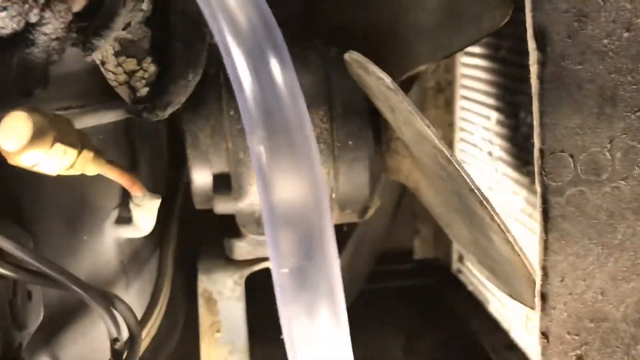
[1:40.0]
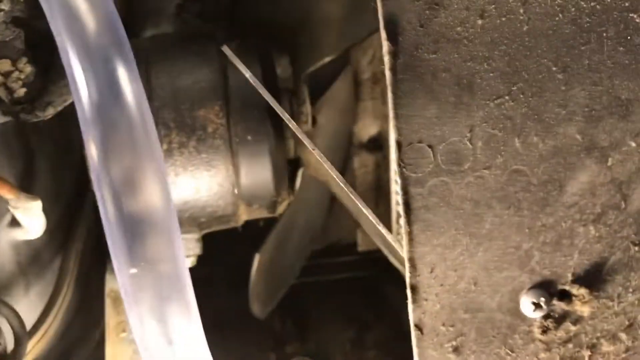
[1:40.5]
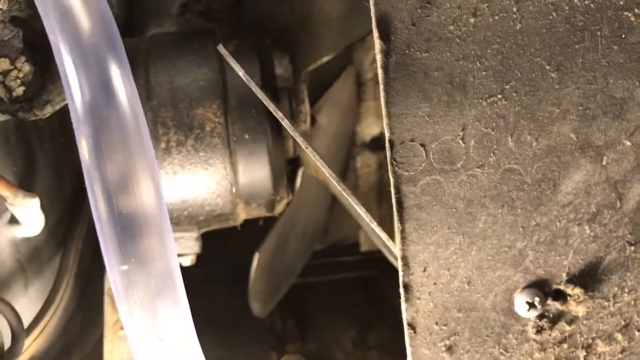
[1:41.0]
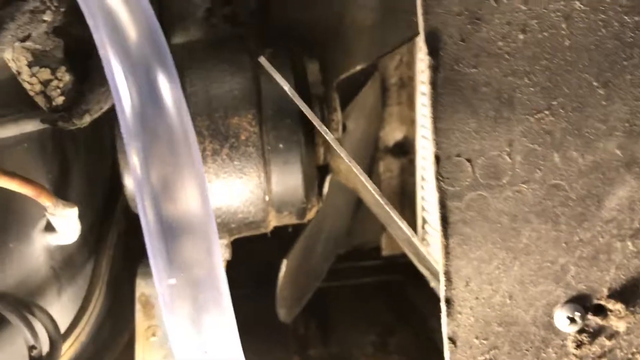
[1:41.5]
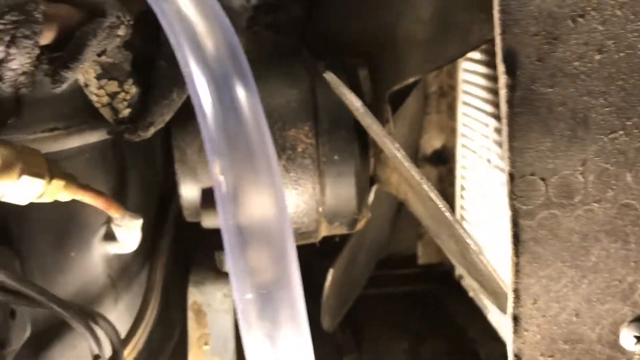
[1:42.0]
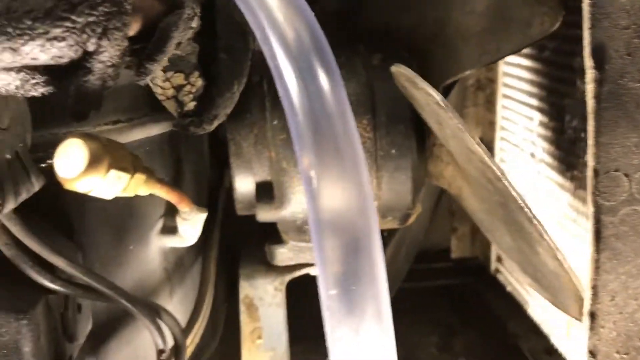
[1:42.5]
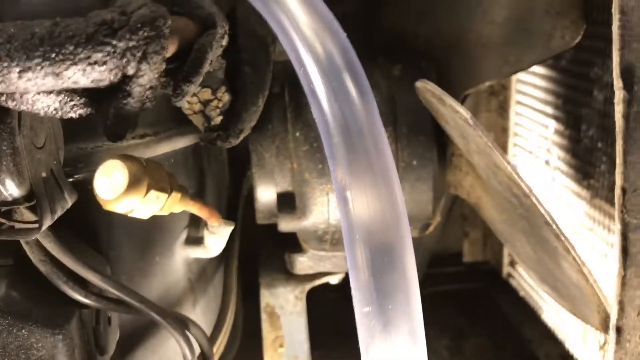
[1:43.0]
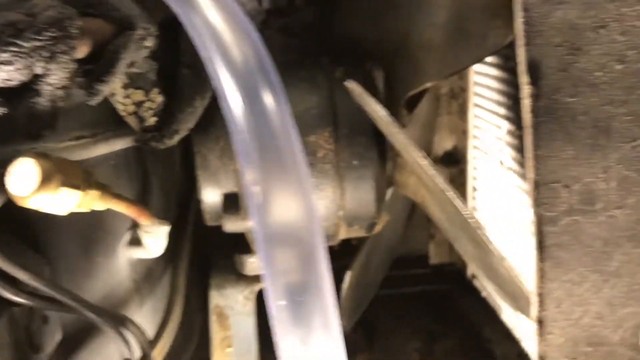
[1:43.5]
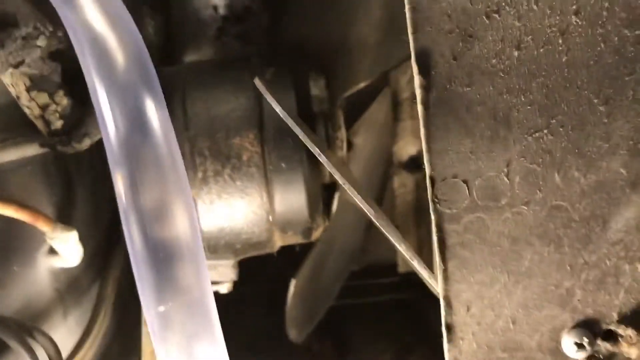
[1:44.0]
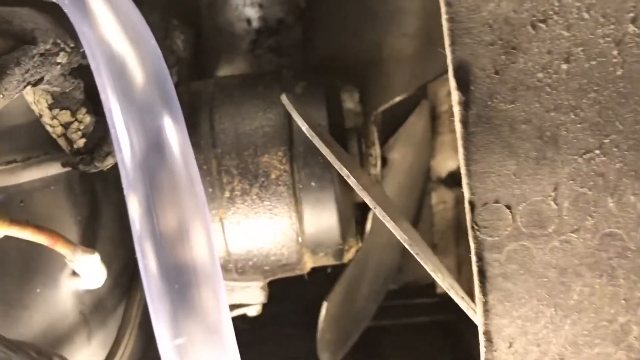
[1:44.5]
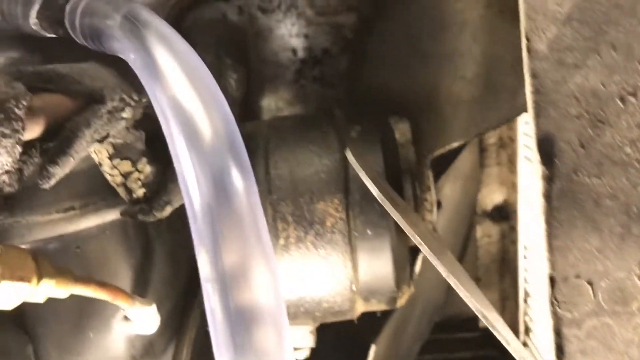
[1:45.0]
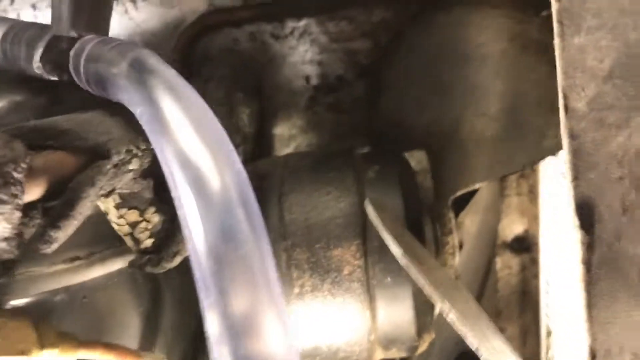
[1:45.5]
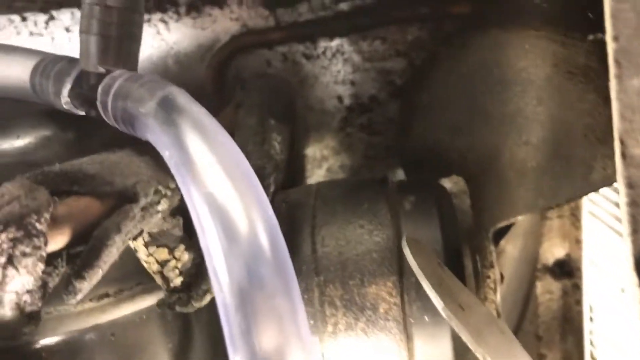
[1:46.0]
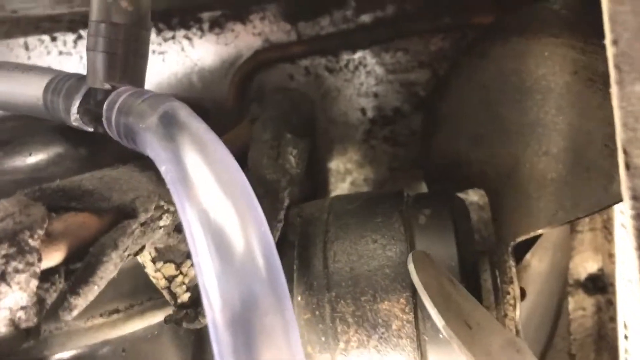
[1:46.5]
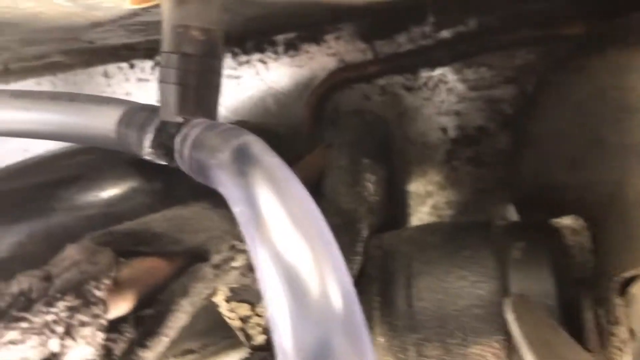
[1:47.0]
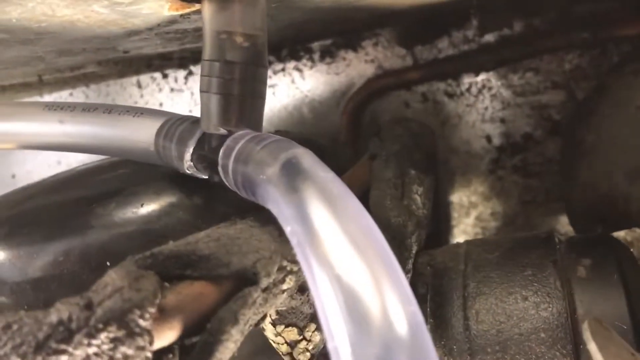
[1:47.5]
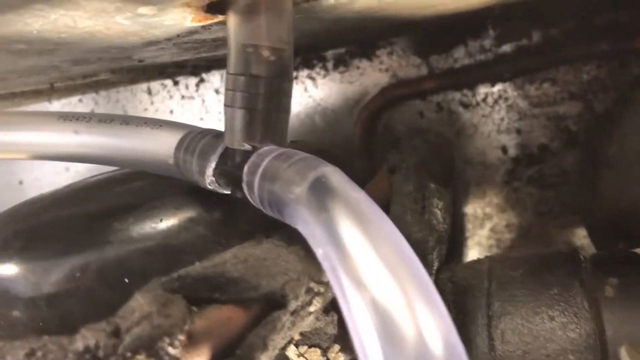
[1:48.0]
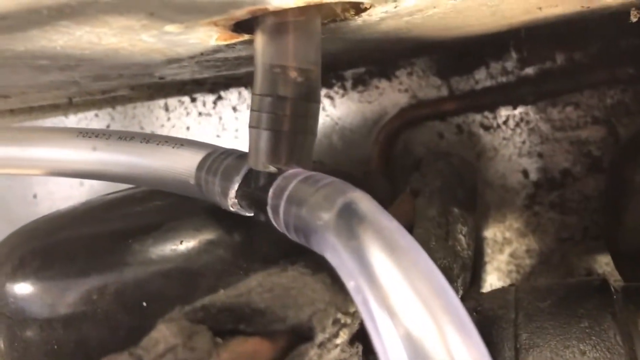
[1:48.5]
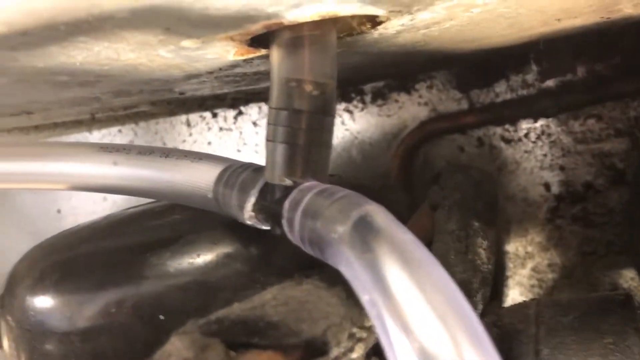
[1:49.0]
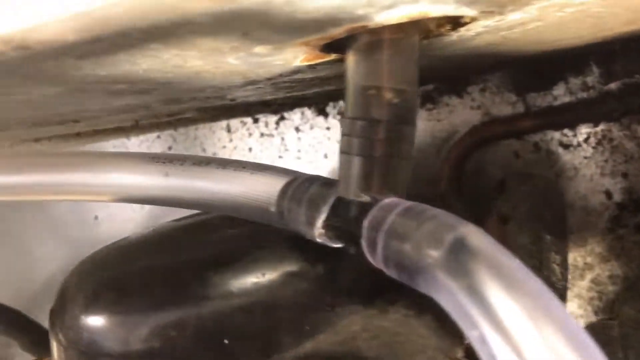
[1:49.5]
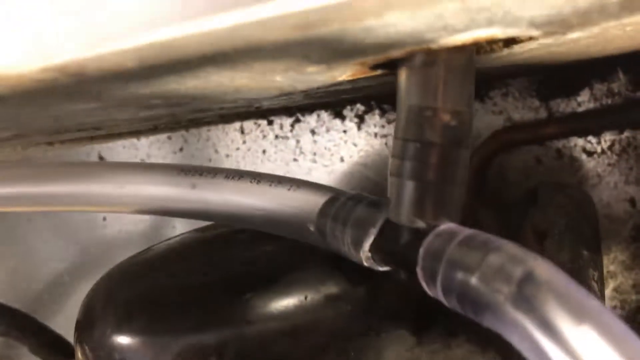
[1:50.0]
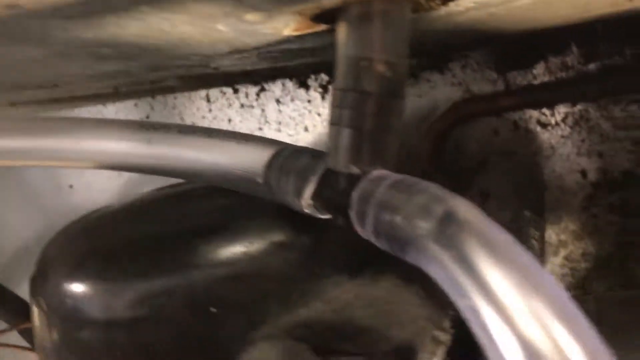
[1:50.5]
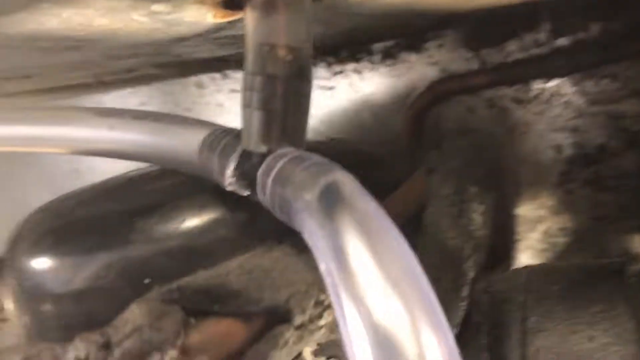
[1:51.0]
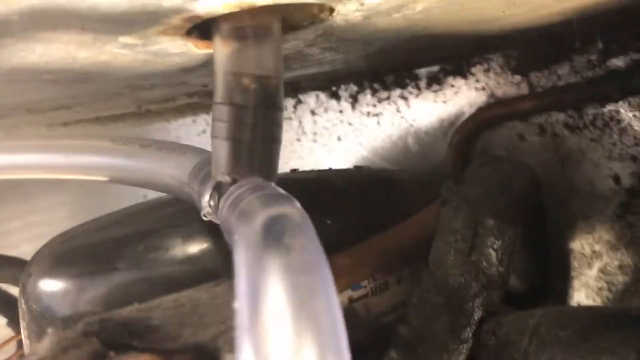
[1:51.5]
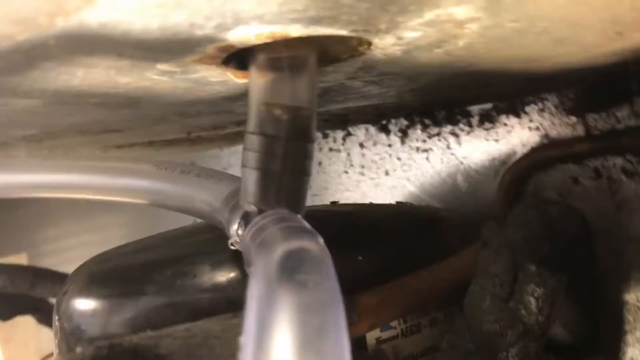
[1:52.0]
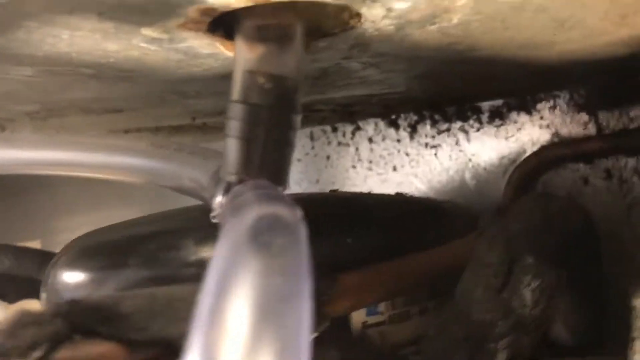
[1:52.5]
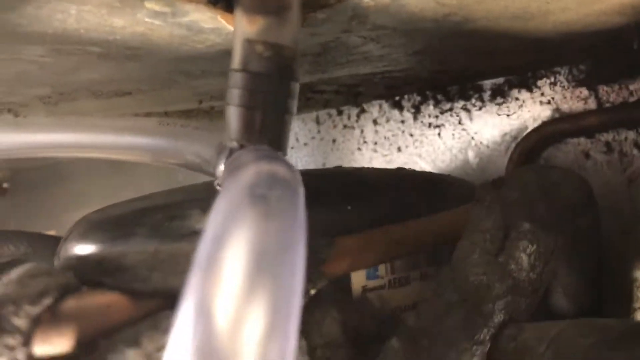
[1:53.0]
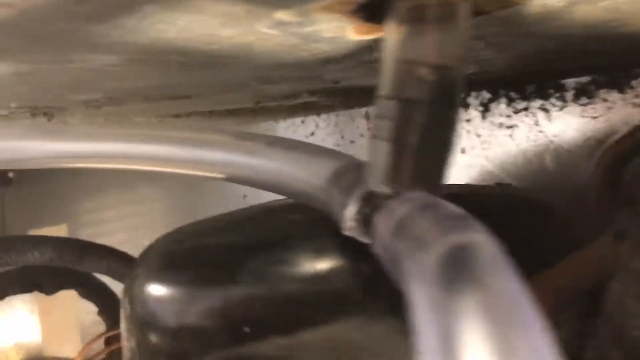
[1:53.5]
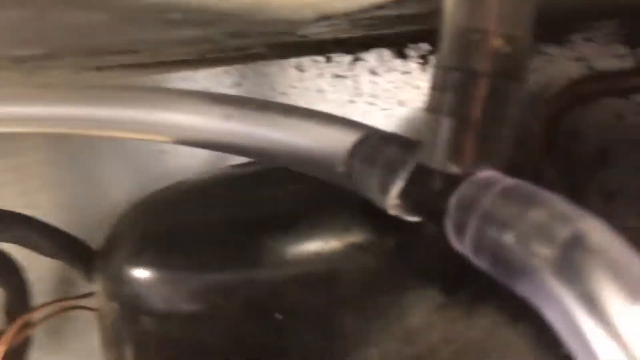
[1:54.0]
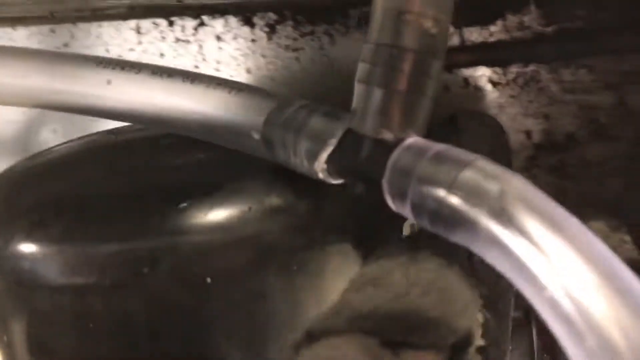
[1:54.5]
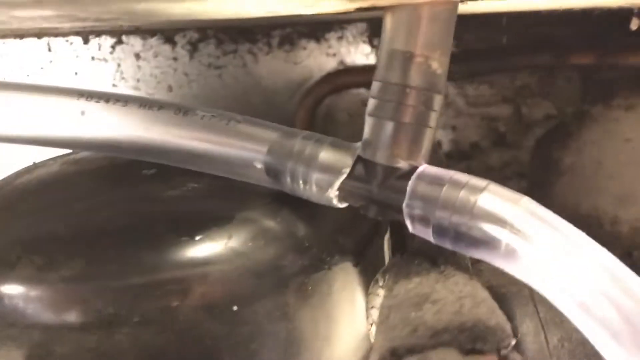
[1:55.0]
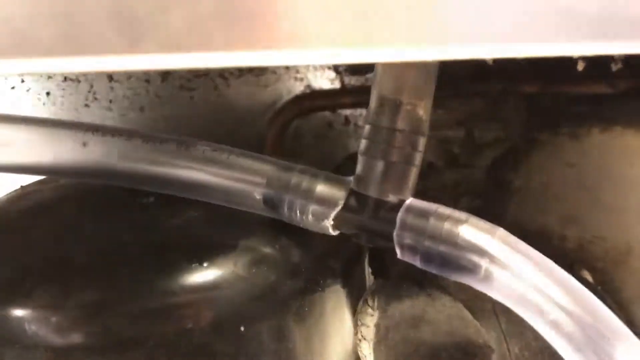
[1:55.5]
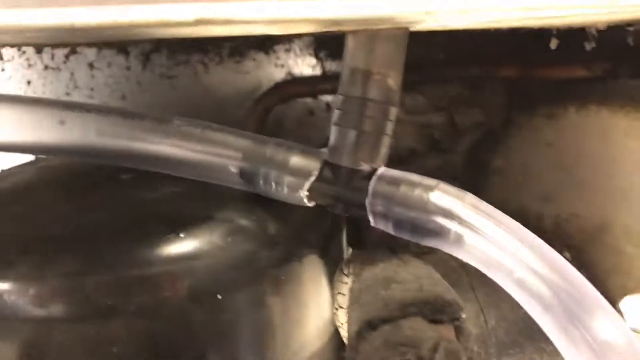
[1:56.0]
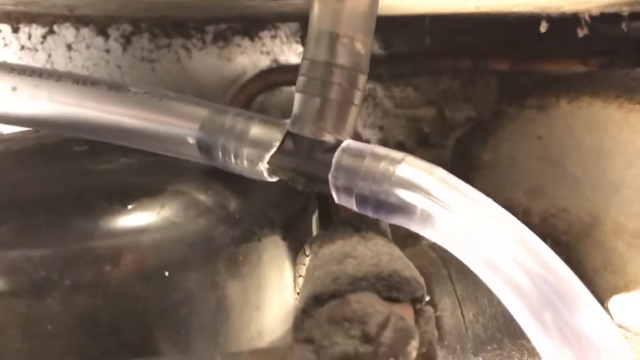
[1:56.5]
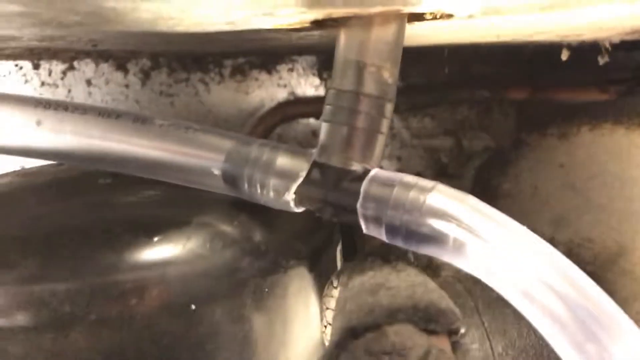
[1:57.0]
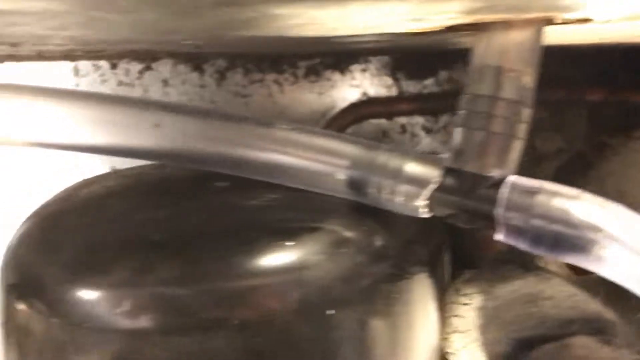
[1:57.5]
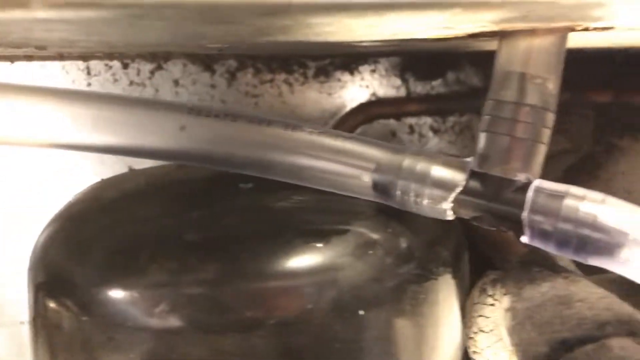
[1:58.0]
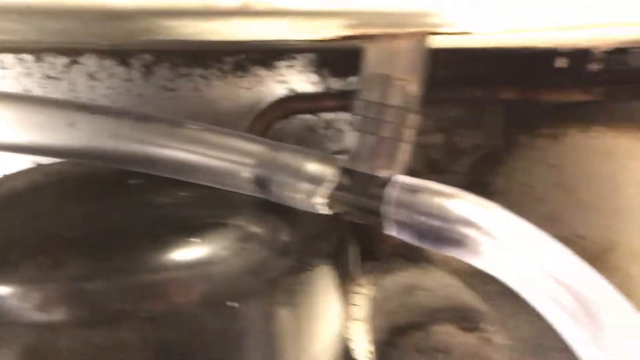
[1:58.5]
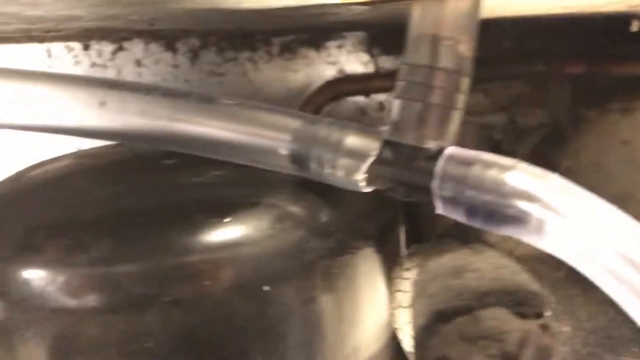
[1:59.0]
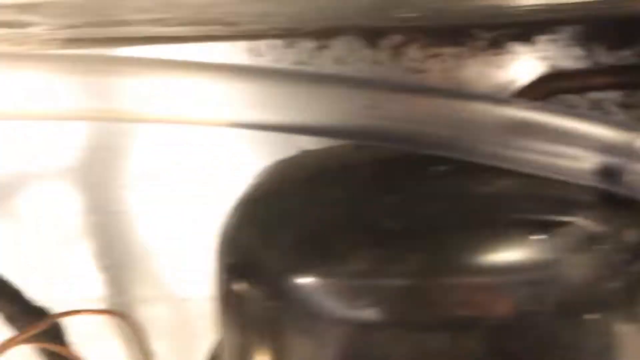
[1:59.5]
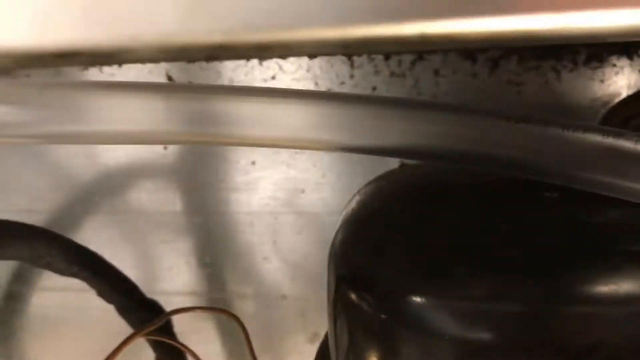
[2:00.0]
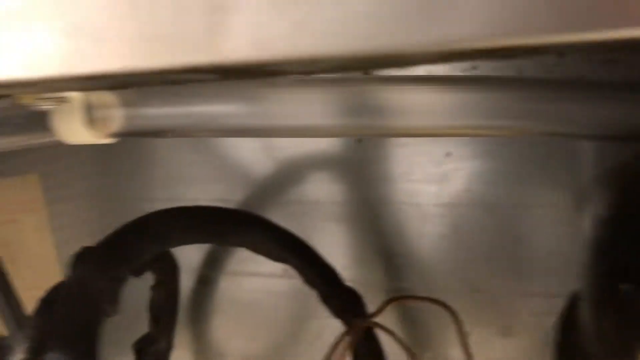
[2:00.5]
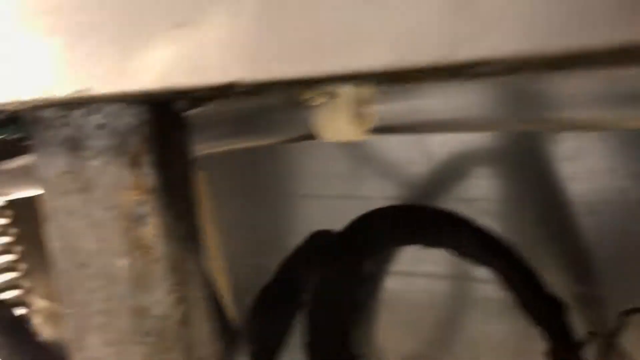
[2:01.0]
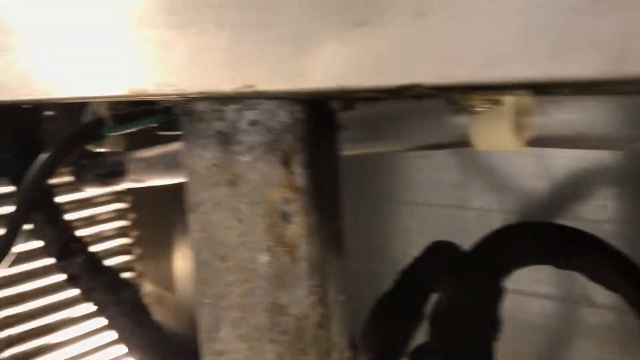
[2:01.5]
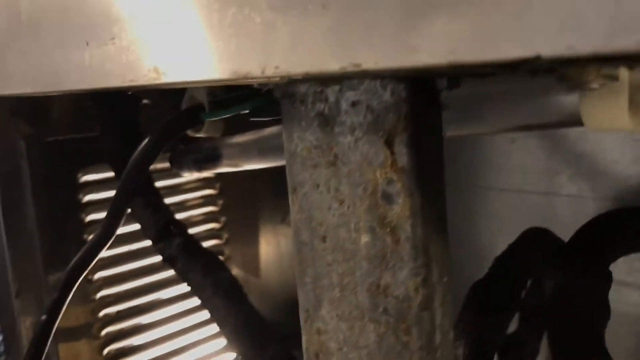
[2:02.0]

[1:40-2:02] The camera continues to look at the fan on its right side, which is not moving. It sways slowly left and right before going upward to show the area right above the fan where the black cylinder was. A better angle shows the clear pipe in the three-way pipe system, with a right angle where the pipe goes up into the top of the machinery. Different angles are shown from right to left as the camera moves around slowly over that section of pipe. The camera moves slightly left, then back right, then pans farther along the newly installed clear pipe, showing its whole route to where it leads on the machinery, ending on the left side of where the pipe goes.